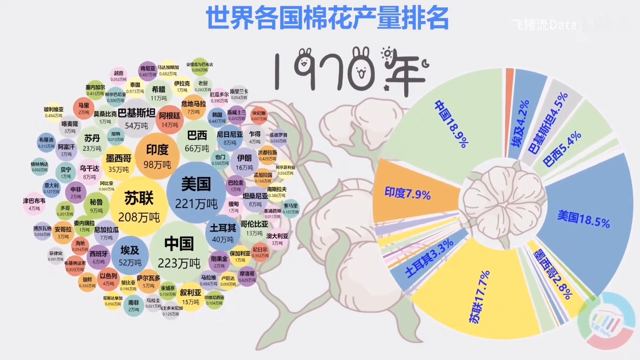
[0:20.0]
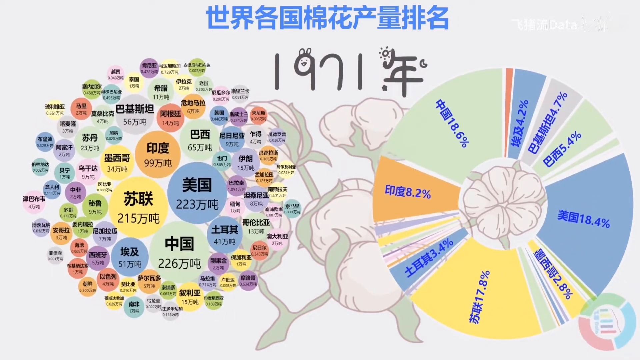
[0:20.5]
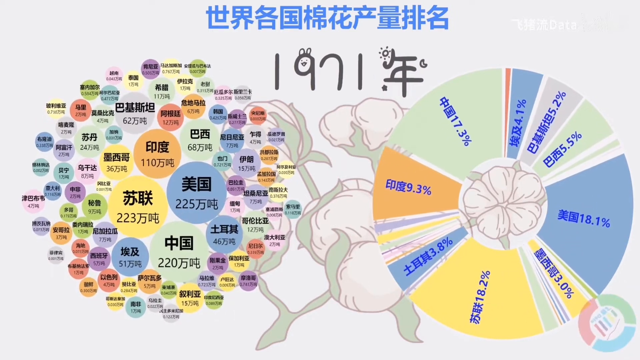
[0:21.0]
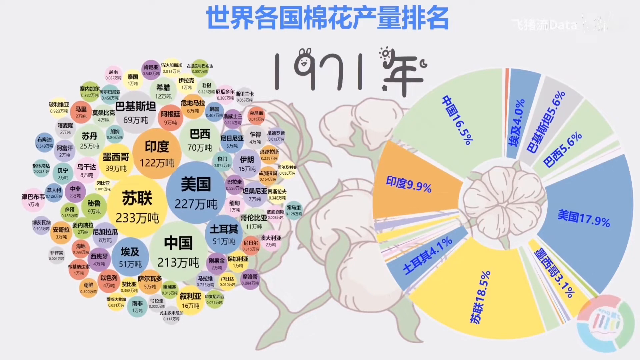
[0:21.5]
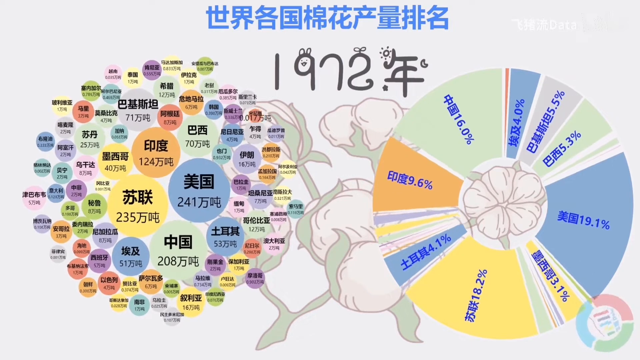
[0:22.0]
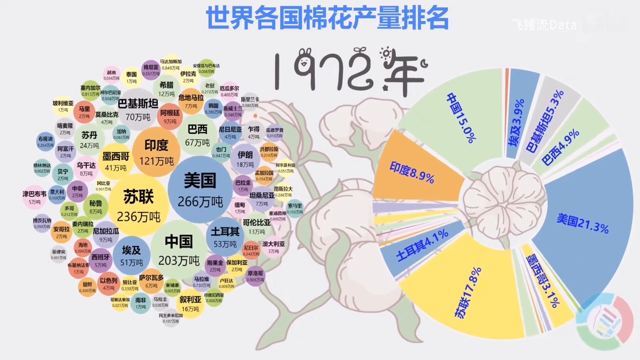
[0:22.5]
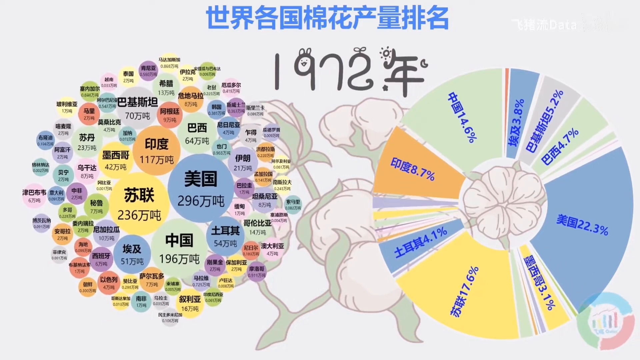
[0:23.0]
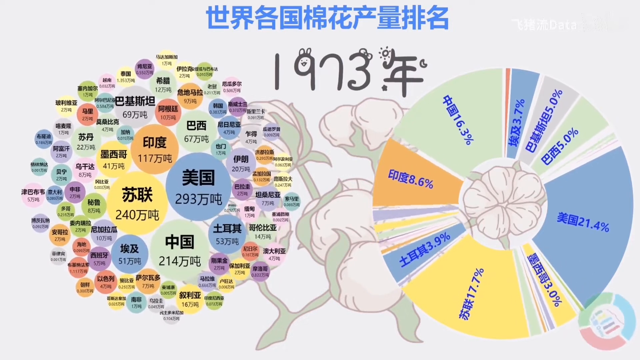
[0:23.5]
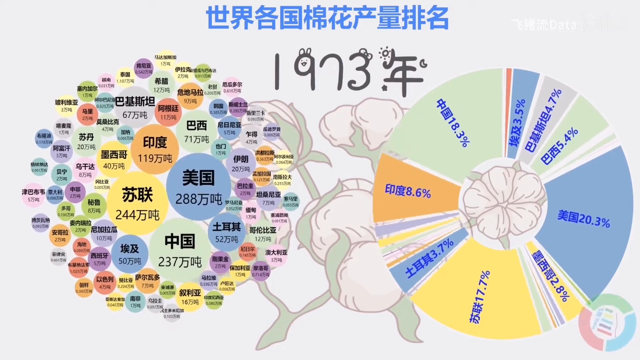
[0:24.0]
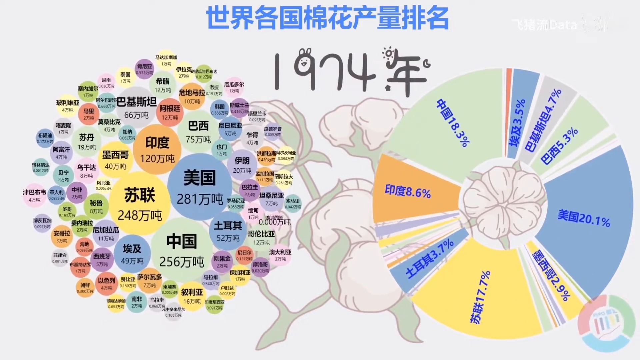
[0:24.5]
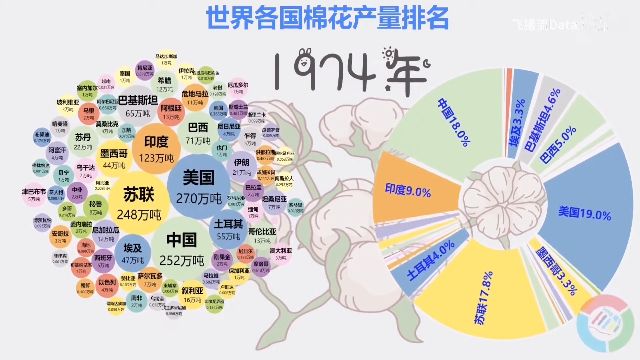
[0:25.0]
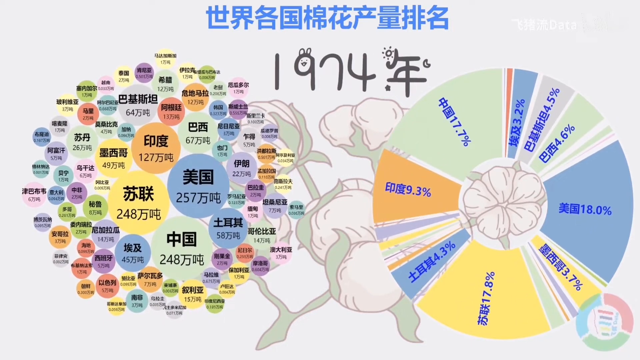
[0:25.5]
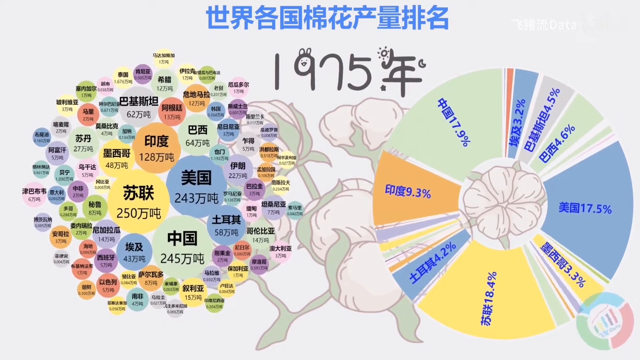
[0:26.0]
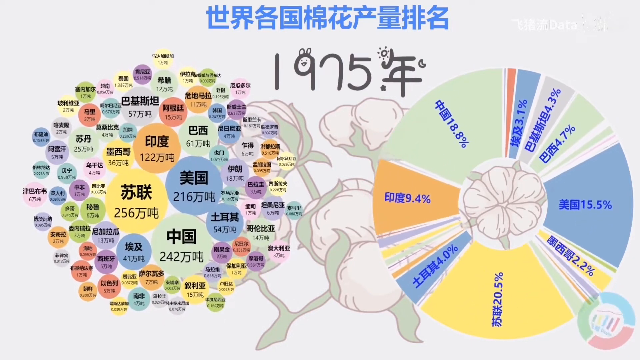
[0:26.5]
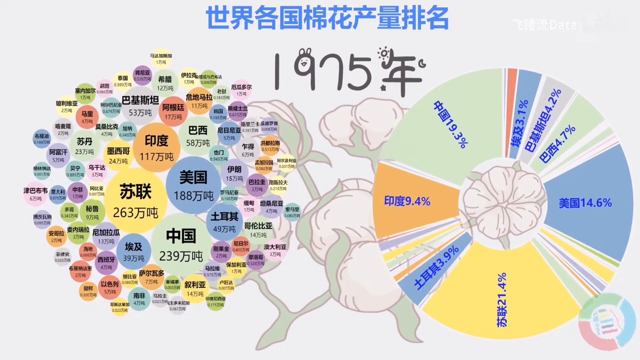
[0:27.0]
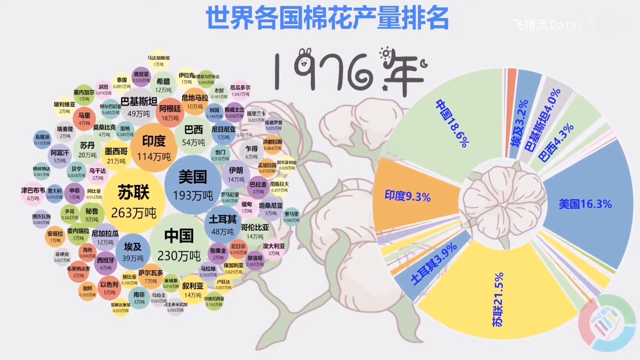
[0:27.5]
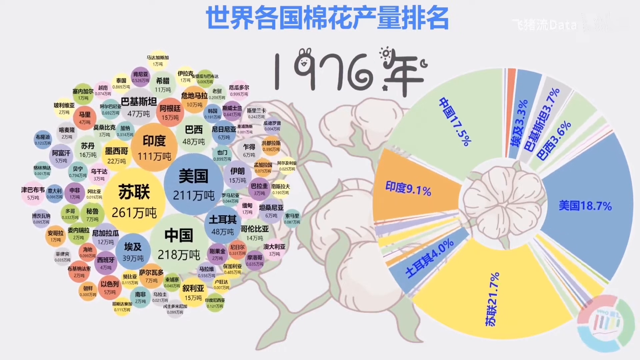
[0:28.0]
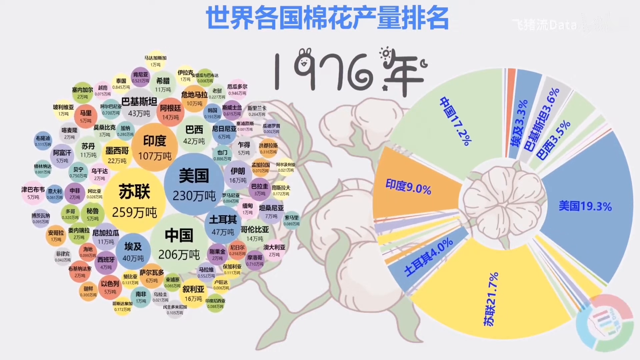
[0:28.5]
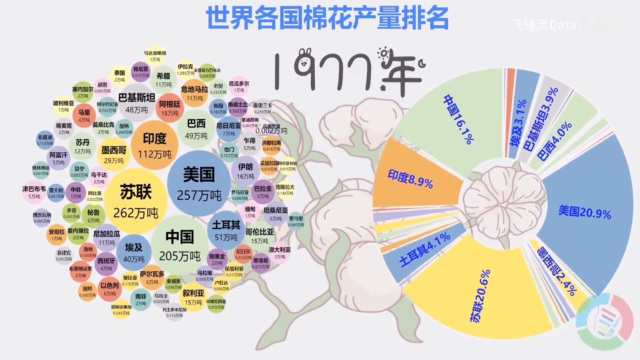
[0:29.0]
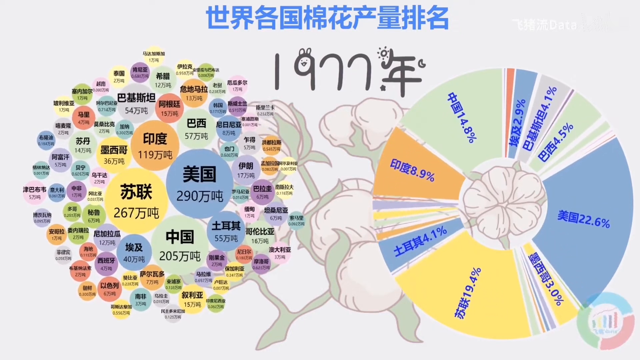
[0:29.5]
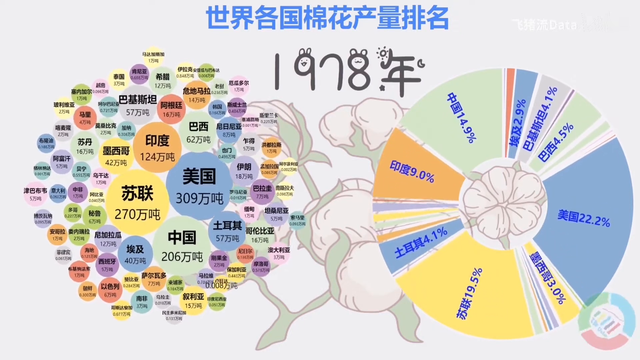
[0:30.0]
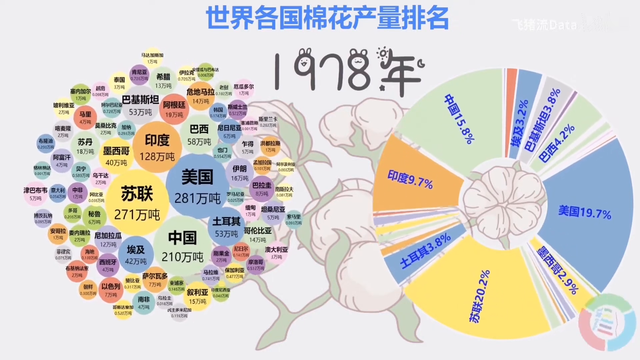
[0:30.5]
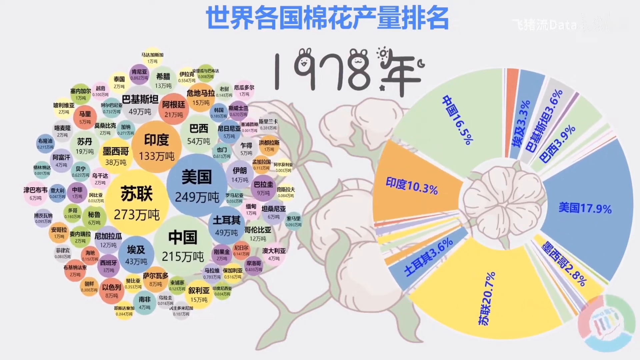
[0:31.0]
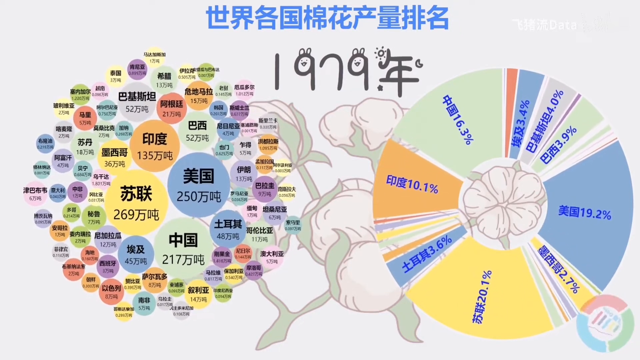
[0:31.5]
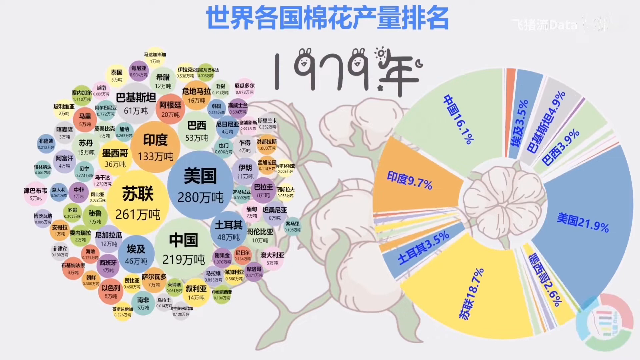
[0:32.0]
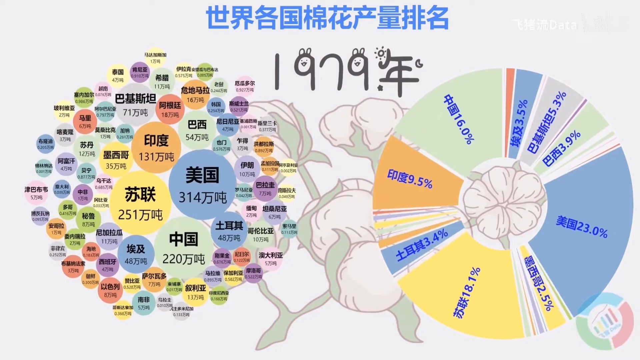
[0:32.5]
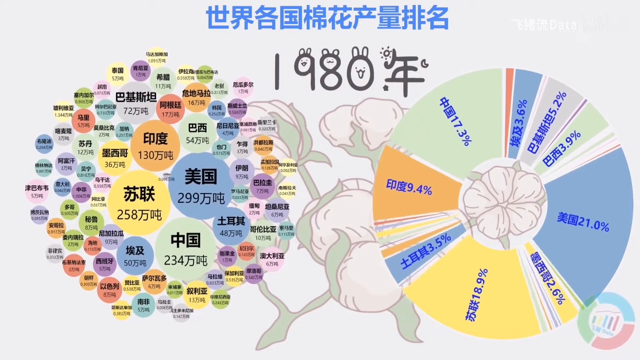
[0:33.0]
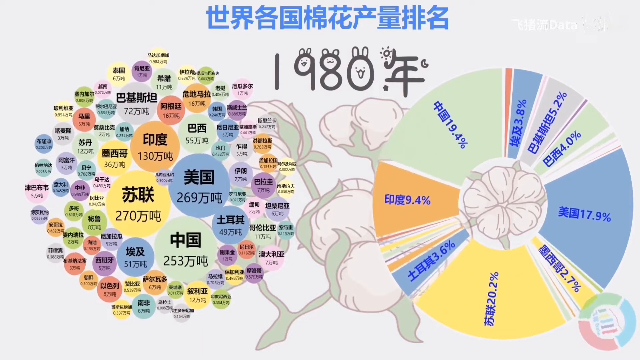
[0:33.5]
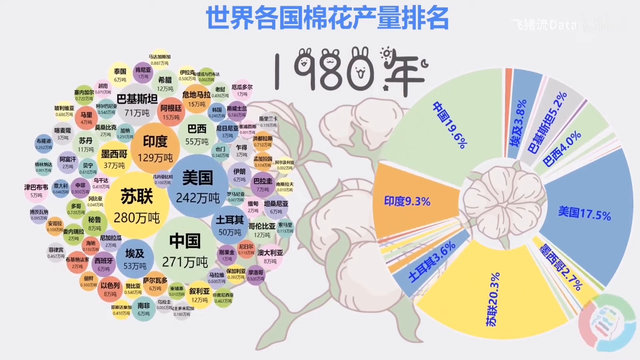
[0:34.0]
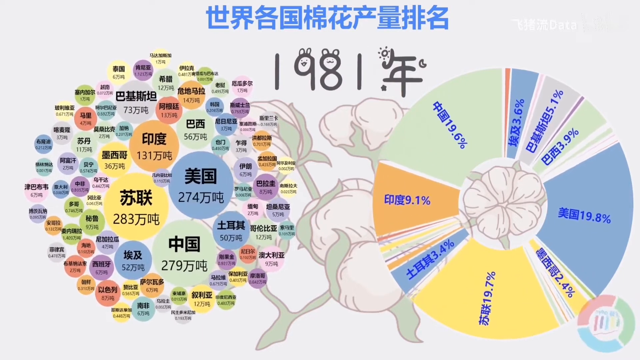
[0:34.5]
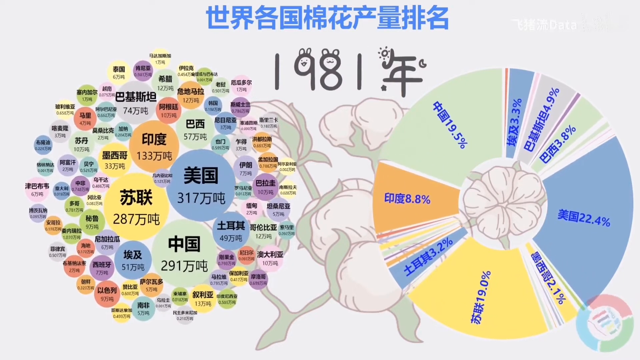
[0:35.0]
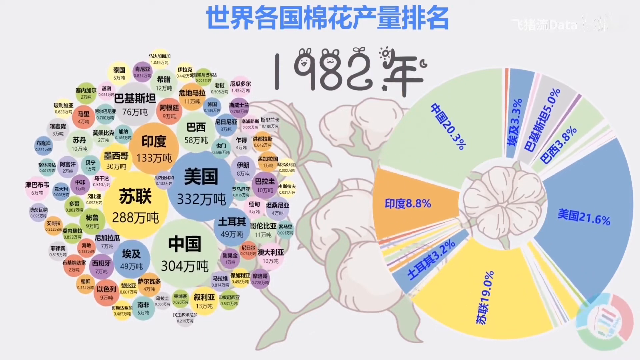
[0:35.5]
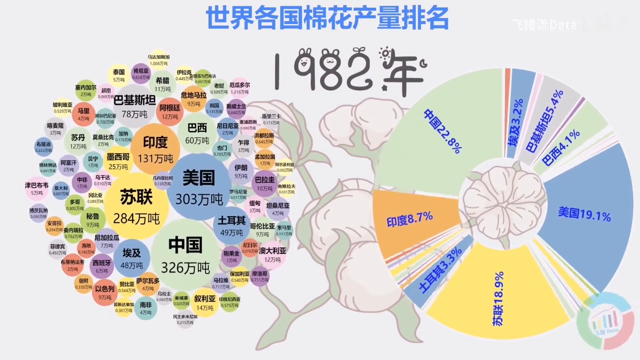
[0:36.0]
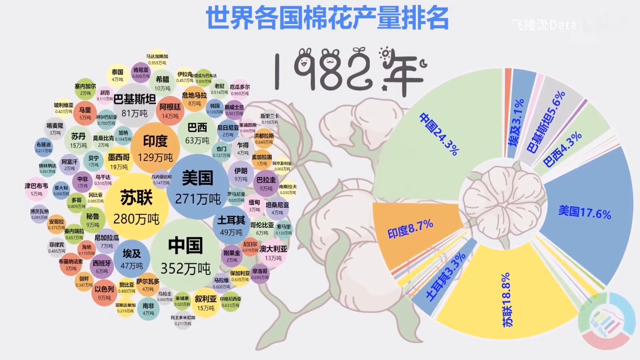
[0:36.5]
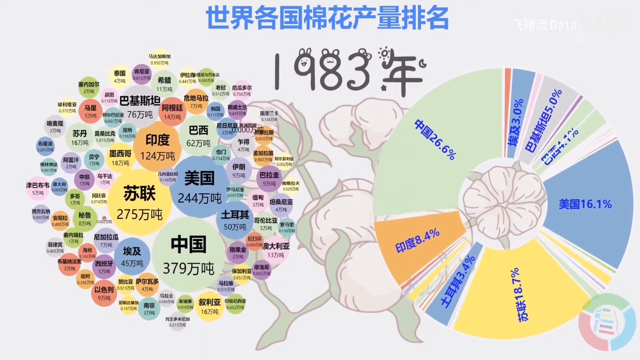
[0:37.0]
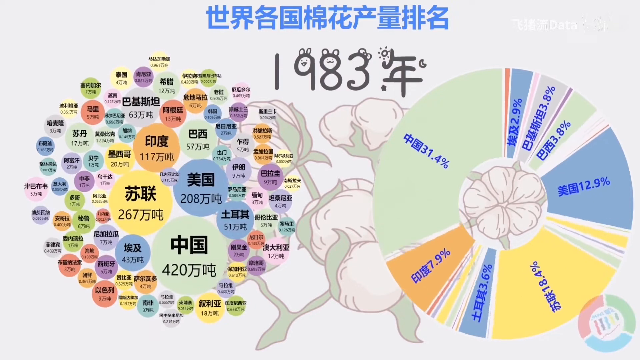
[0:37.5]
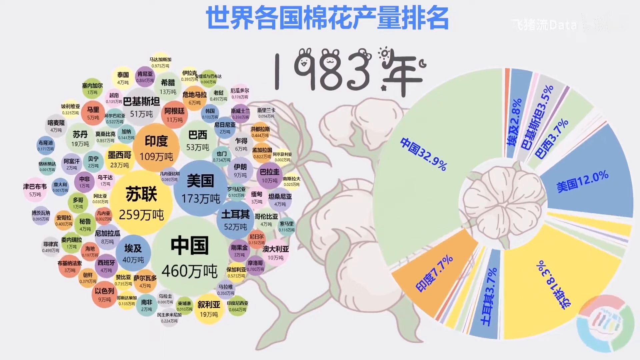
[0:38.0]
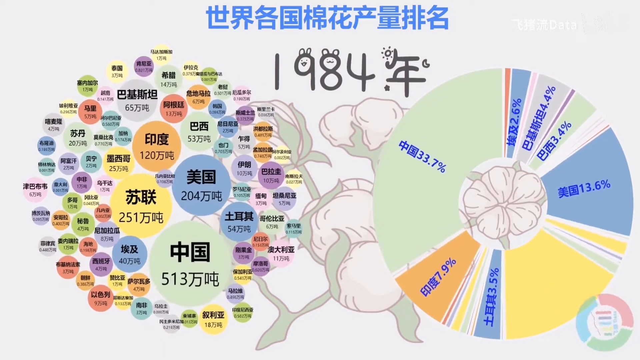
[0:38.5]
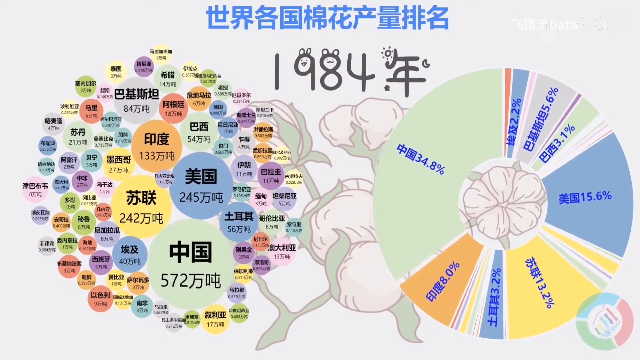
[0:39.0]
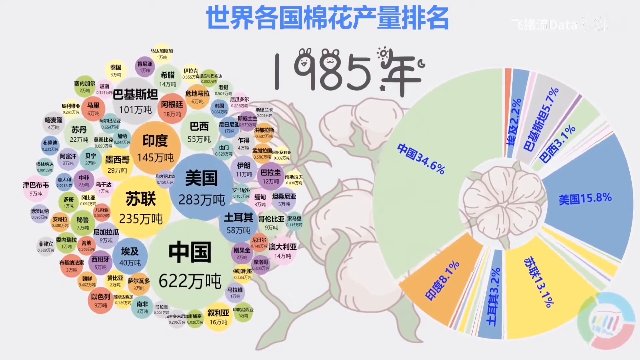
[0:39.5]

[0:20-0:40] An animated pie chart and bubble chart share the screen, with the number 1973, representing the year, between them. The title, written in Chinese, is about the output of cotton in the world. The pie chart, on the right side of the screen, rotates clockwise; America is at 21.5% and China has increased to 16%. In the bubble chart, the U.S. output has decreased while China's has increased: China's output, 116 in 1963, is now 211 in 1973, while America's, 332 in 1963, is now 294. The pie chart is color-coded, with the U.S. in light blue, China in light green, Brazil in light green and Mexico in light yellow. On the bubble chart, the size of each circle is related to the output.